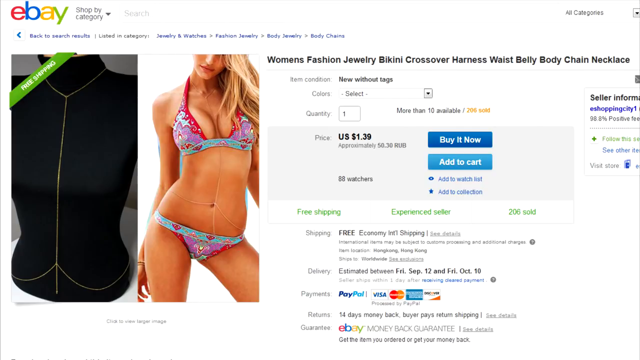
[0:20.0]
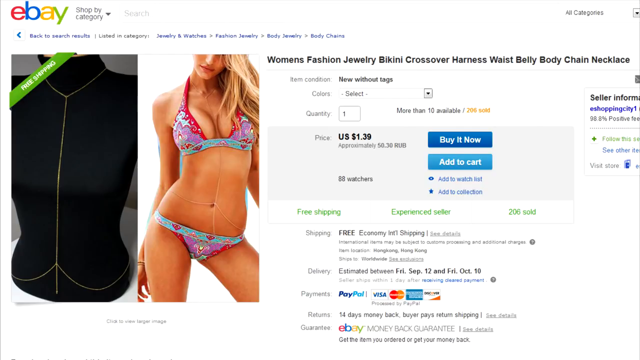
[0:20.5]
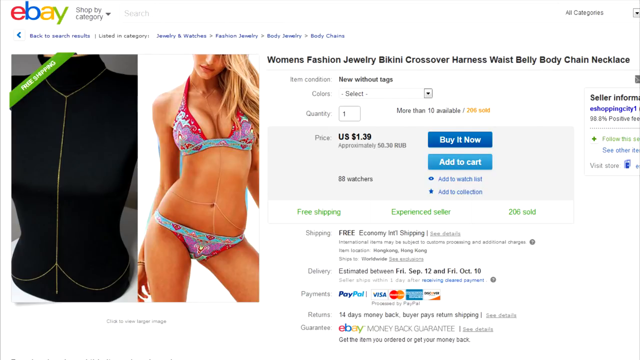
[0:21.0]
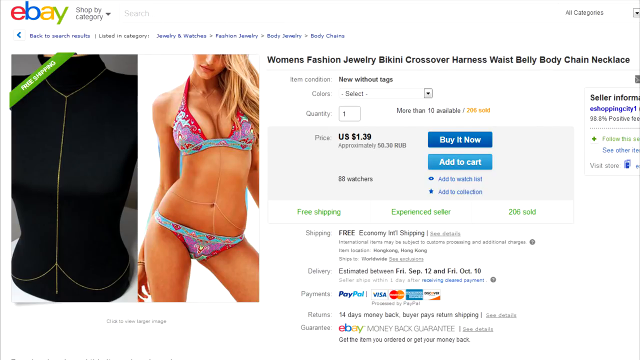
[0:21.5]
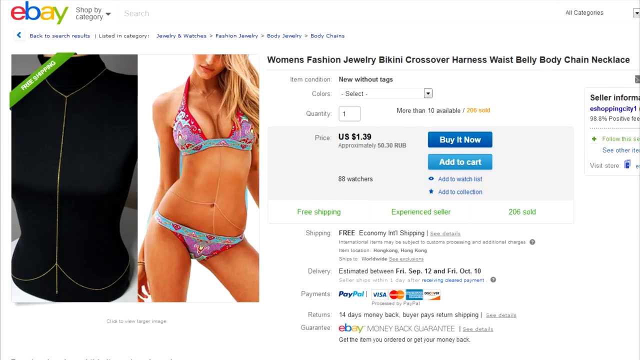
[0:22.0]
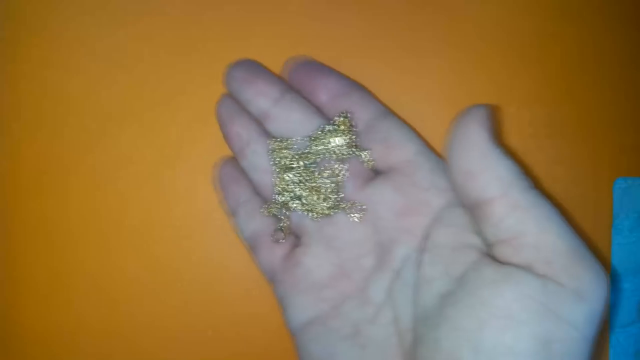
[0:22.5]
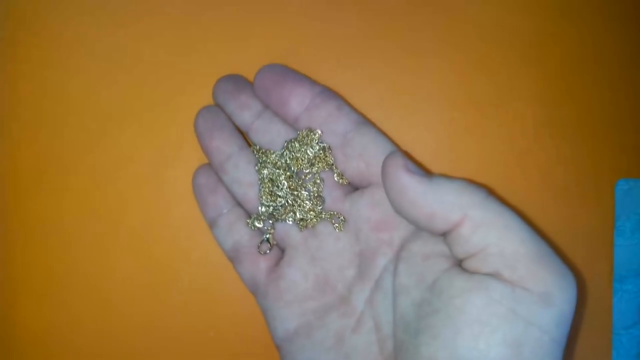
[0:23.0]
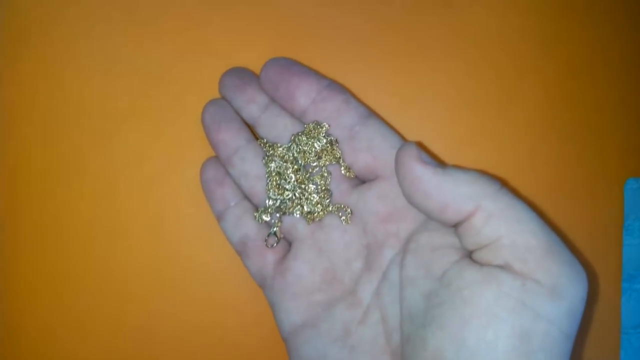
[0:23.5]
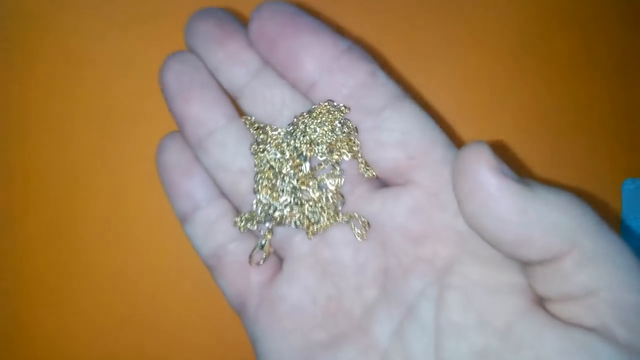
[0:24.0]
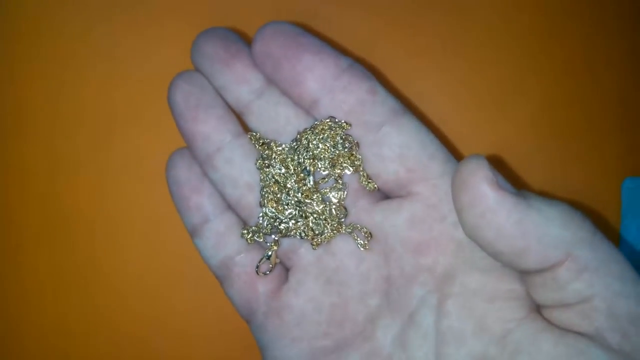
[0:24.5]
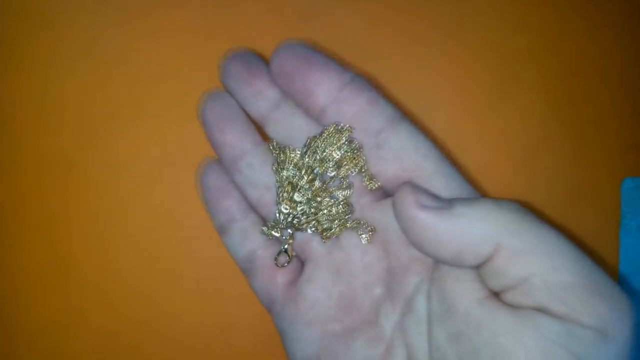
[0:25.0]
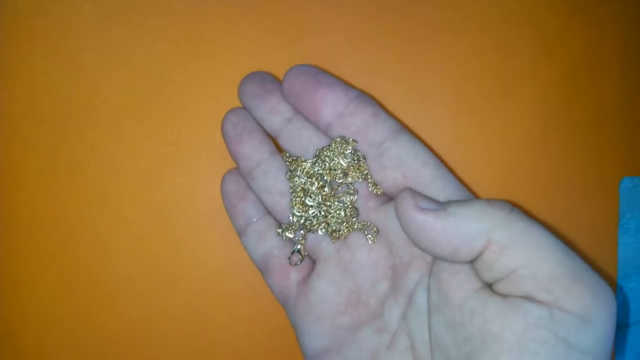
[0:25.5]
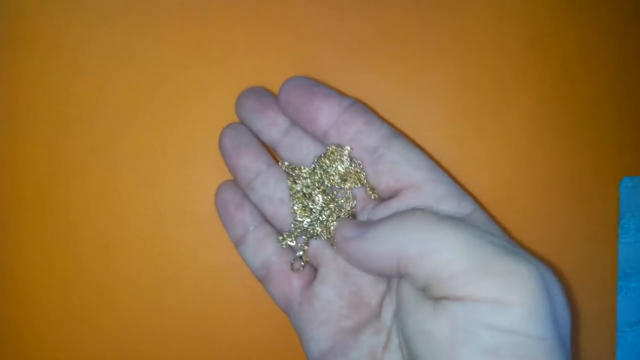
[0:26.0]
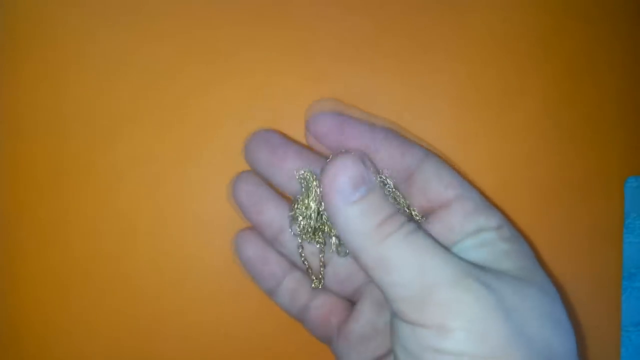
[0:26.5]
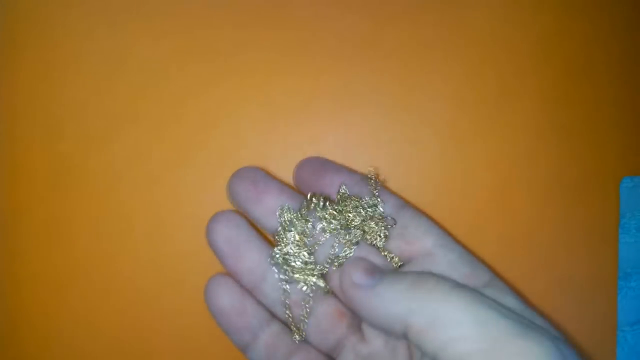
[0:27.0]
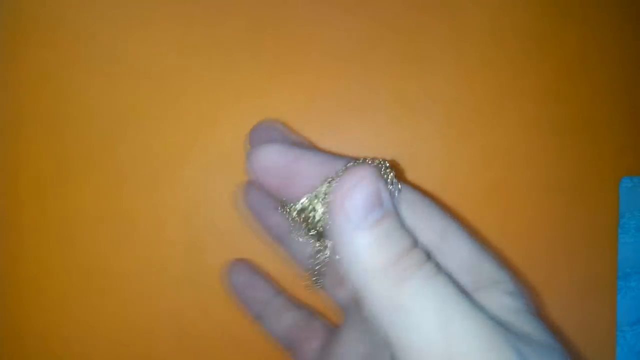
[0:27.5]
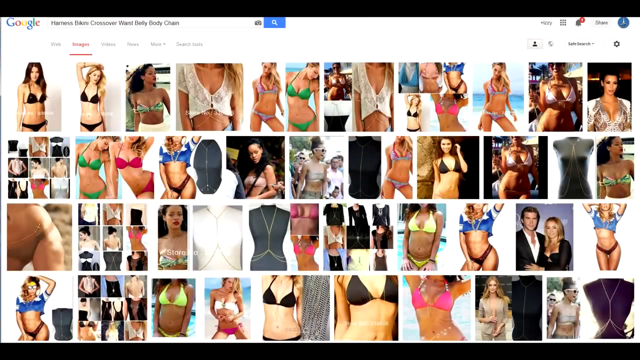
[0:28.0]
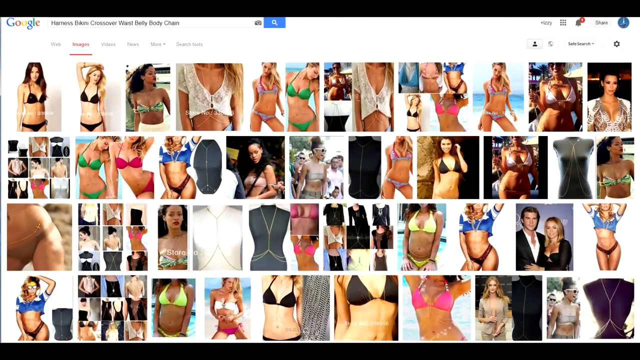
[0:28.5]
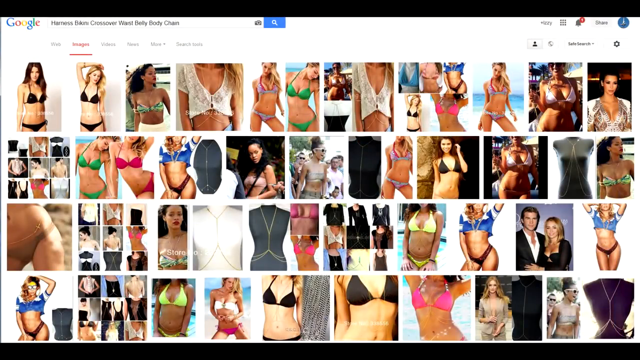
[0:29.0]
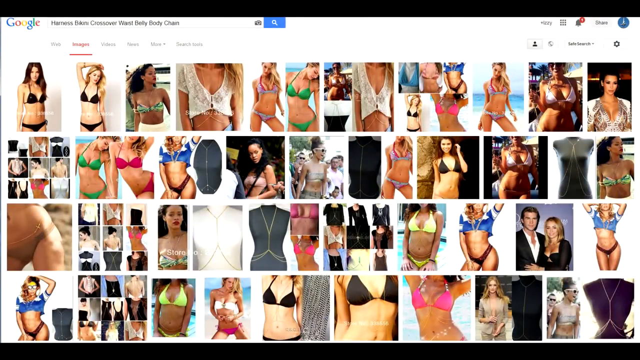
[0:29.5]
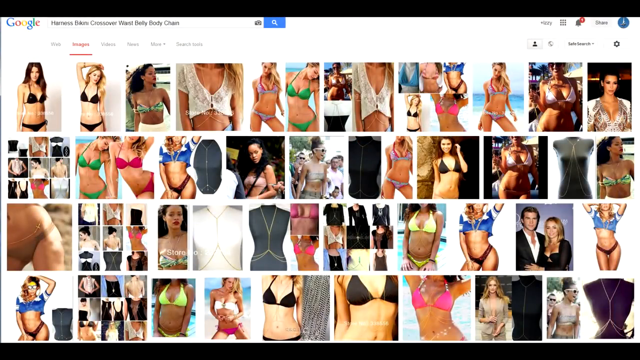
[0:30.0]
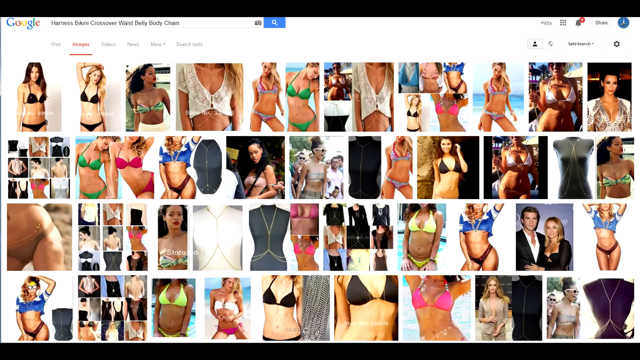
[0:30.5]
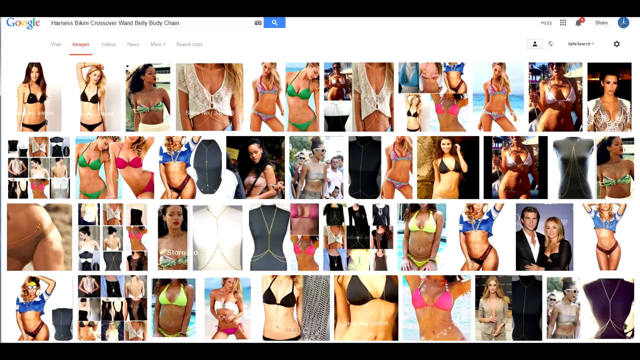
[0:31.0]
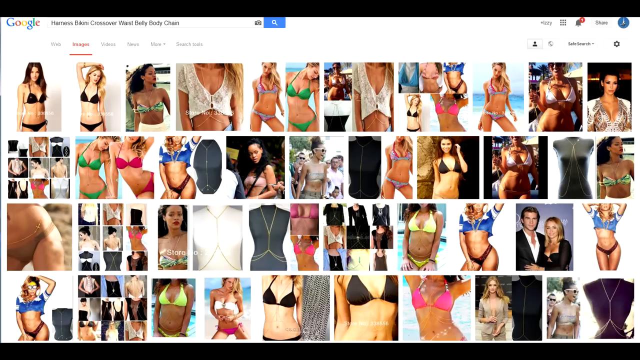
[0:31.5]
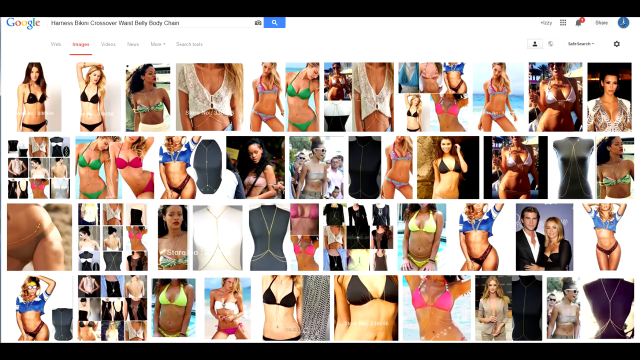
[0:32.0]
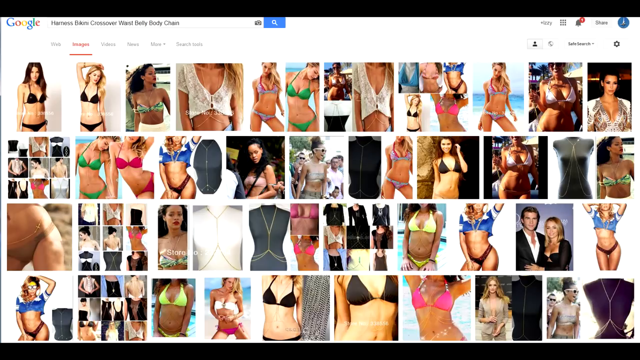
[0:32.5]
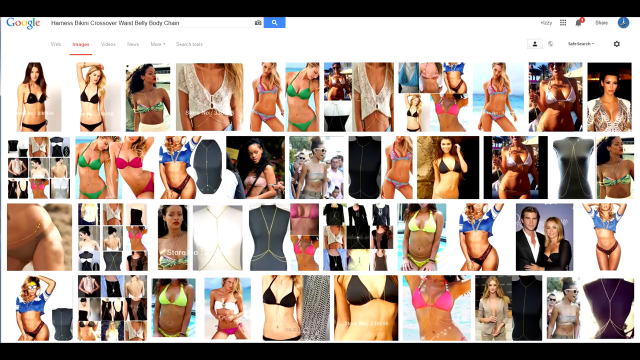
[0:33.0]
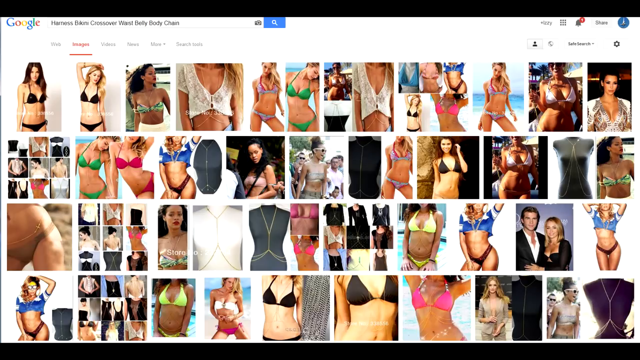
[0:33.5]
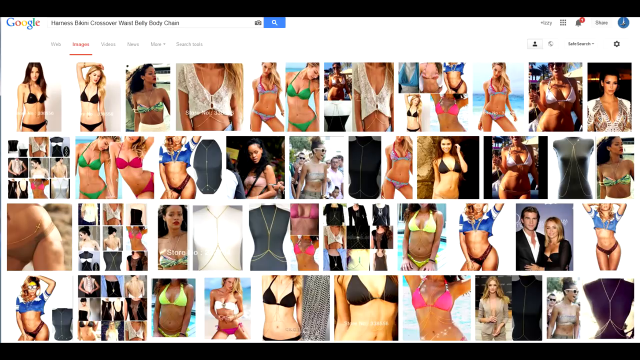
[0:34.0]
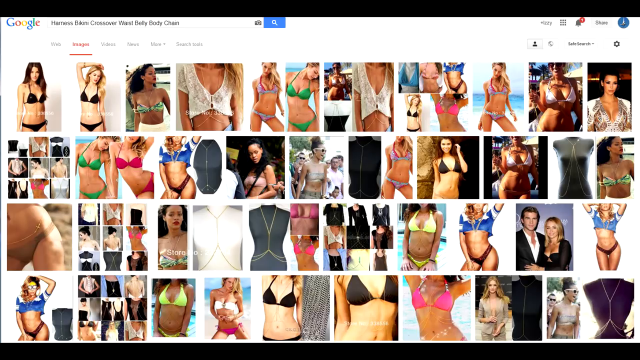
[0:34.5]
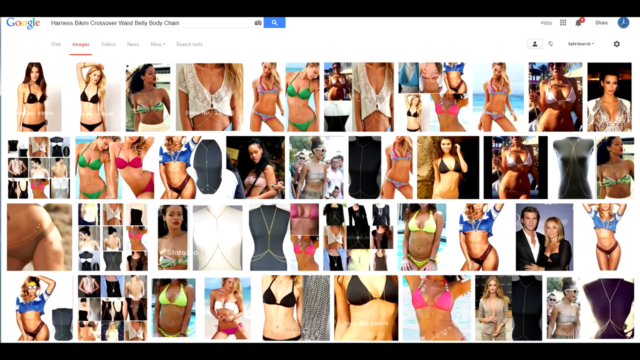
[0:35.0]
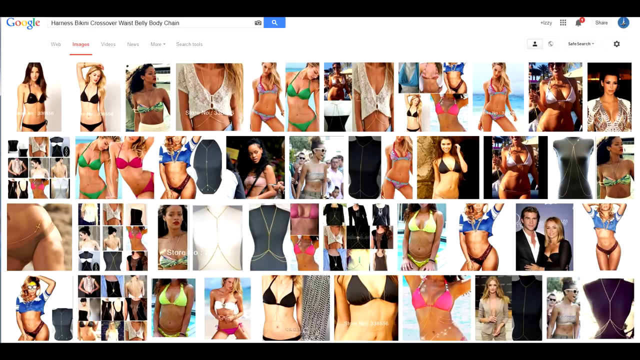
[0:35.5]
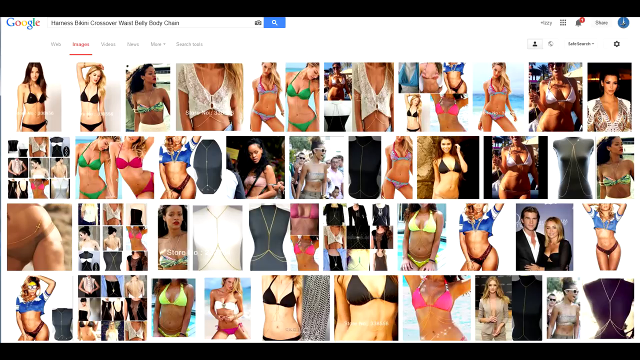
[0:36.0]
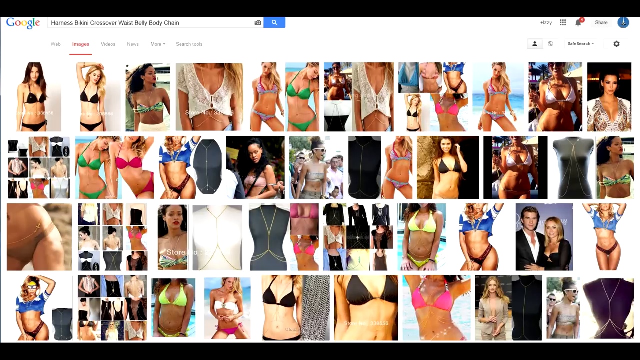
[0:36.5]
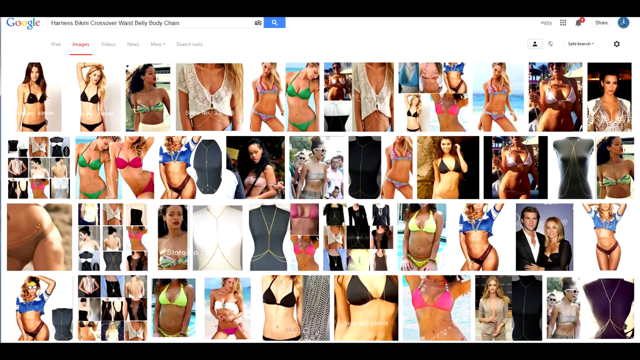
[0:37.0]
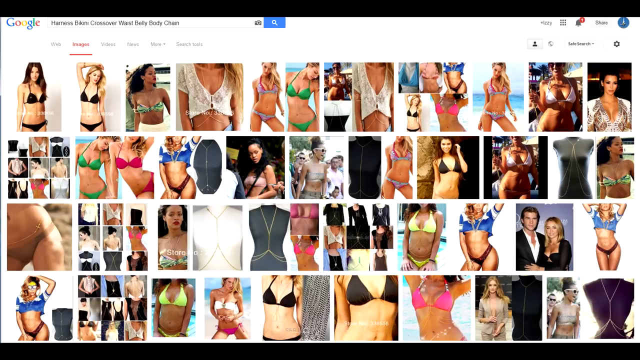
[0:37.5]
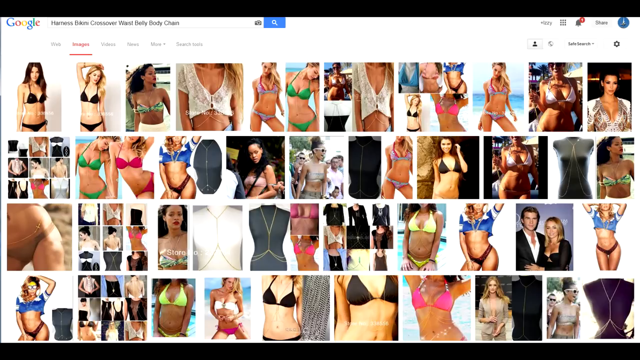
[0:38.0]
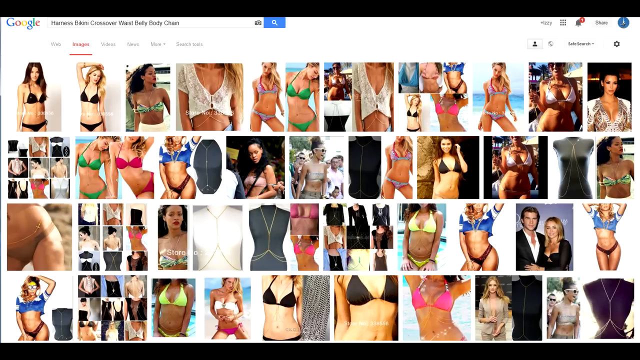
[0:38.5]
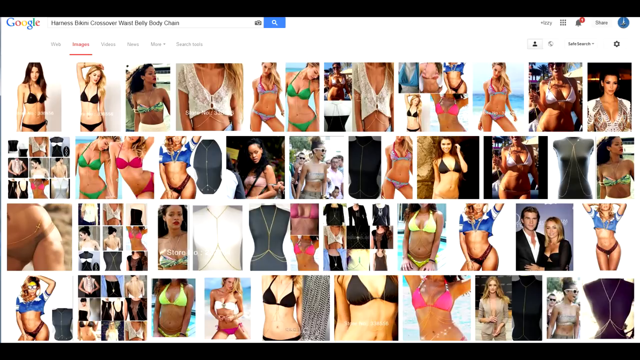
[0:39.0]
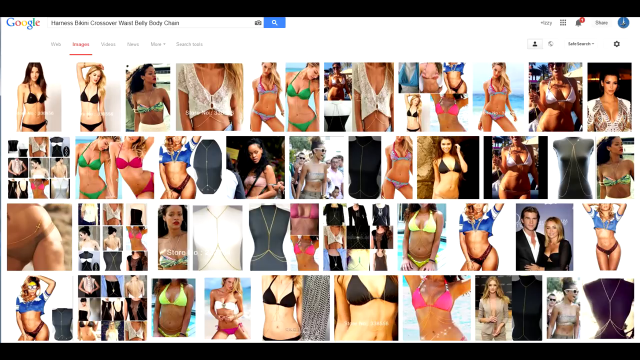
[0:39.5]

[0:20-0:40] A recording of a computer screen shows an eBay listing for an item labeled "women's fashion jewelry bikini crossover harness waist belly body chain necklace". On the left is a photo of the item on a black mannequin: essentially a thin gold chain necklace that wraps around the neck and the waist, going downwards. Another photo shows a woman in a bikini wearing the same chain. The video cuts to a person holding the chain up to the camera in their right hand; the chain rests on their four fingers and they move it around on their hand with their thumb, holding their hand over an orange table or surface. The video then cuts to a Google image search showing various pictures of models wearing the chain in various ways.